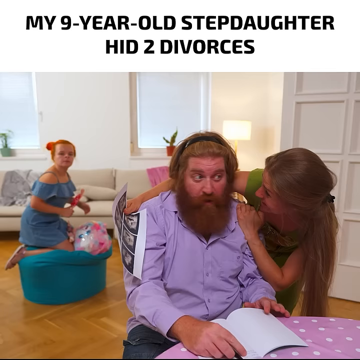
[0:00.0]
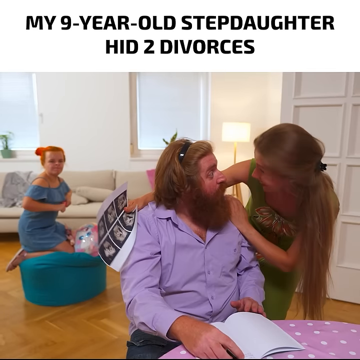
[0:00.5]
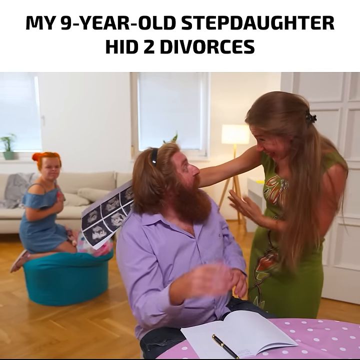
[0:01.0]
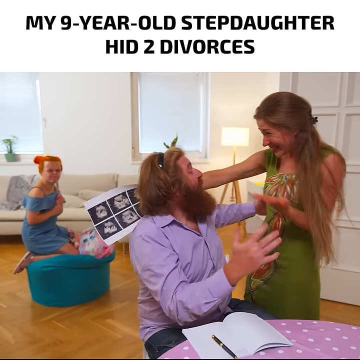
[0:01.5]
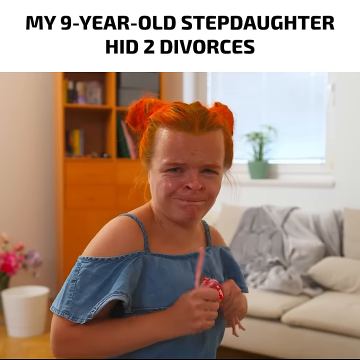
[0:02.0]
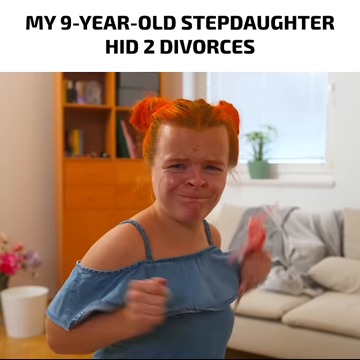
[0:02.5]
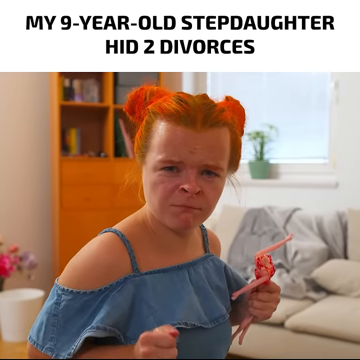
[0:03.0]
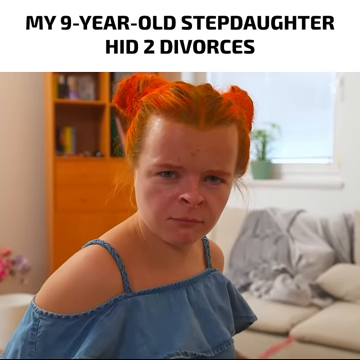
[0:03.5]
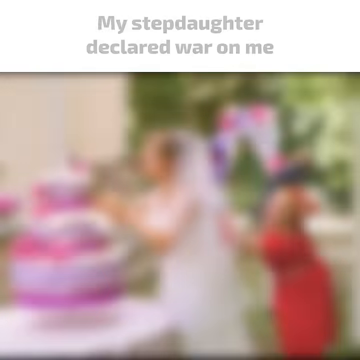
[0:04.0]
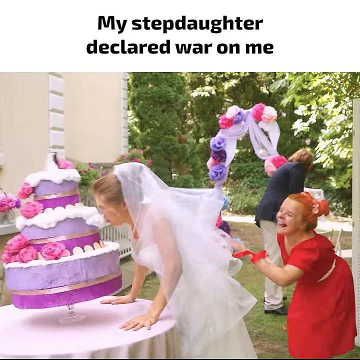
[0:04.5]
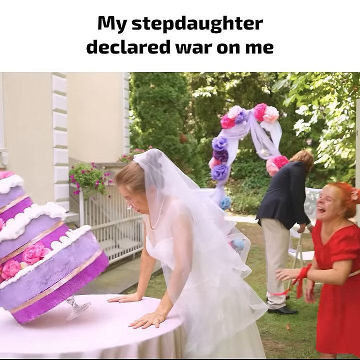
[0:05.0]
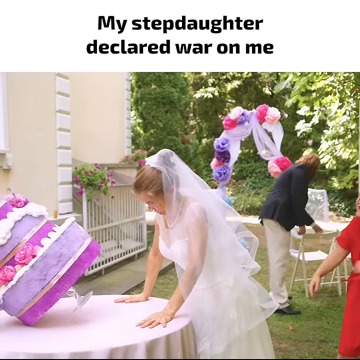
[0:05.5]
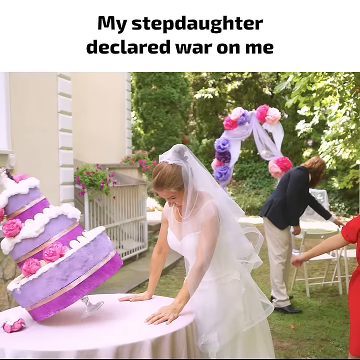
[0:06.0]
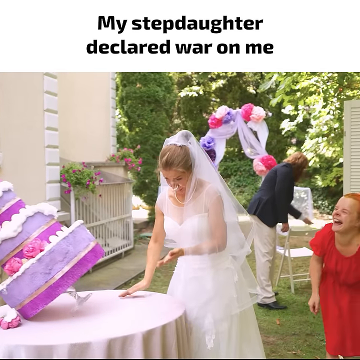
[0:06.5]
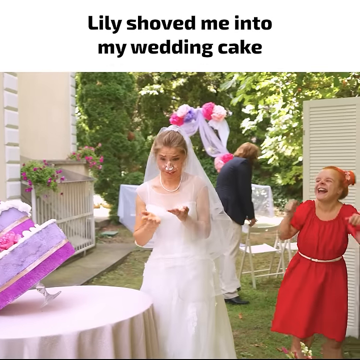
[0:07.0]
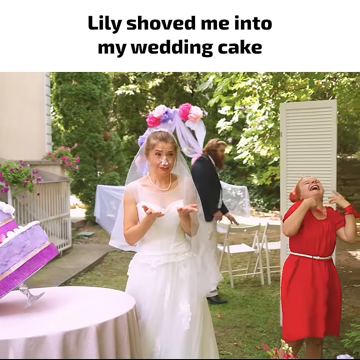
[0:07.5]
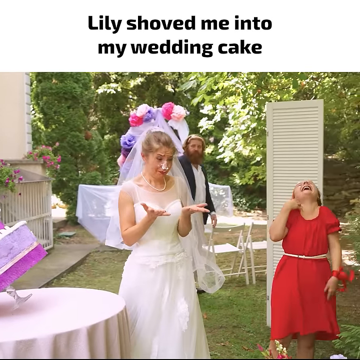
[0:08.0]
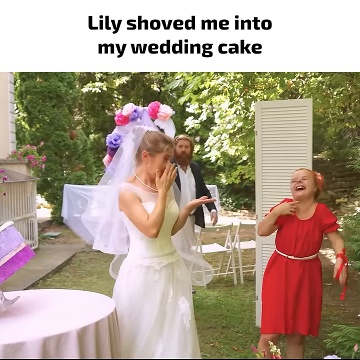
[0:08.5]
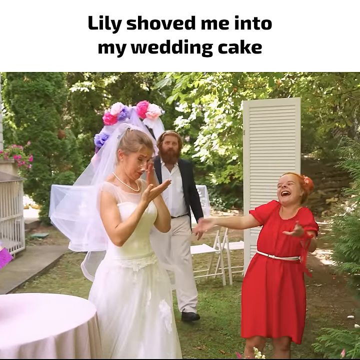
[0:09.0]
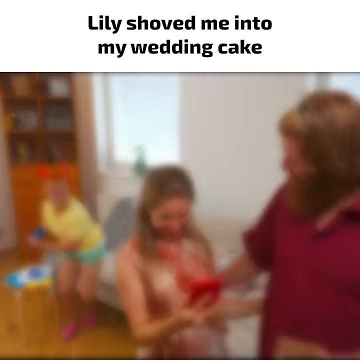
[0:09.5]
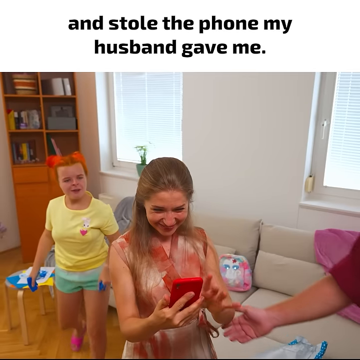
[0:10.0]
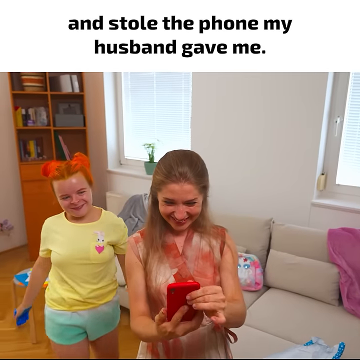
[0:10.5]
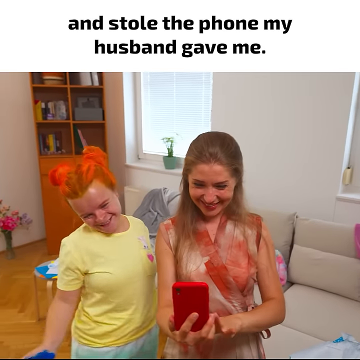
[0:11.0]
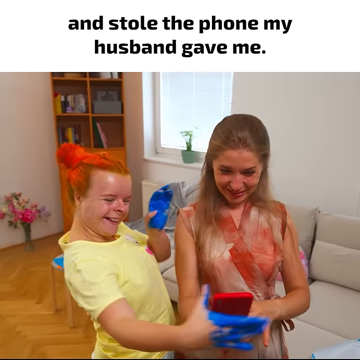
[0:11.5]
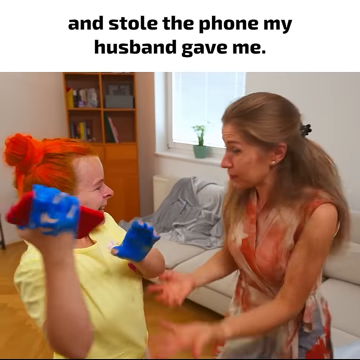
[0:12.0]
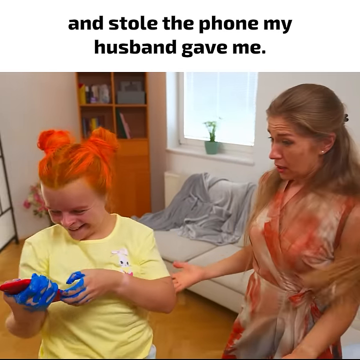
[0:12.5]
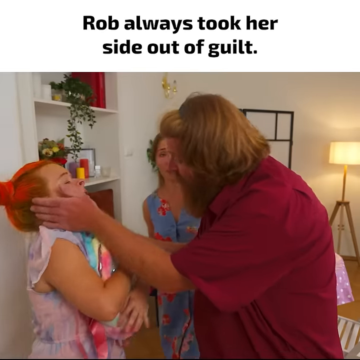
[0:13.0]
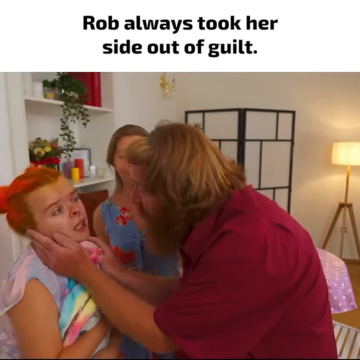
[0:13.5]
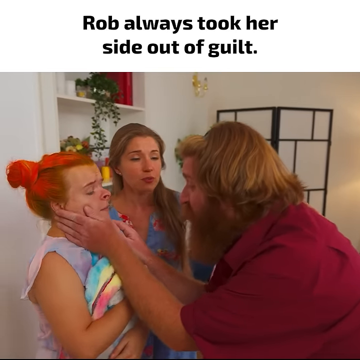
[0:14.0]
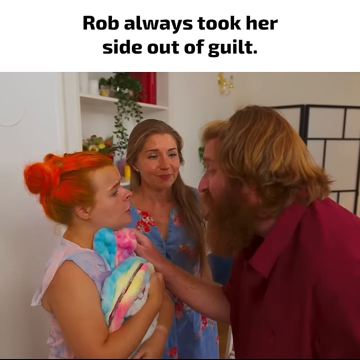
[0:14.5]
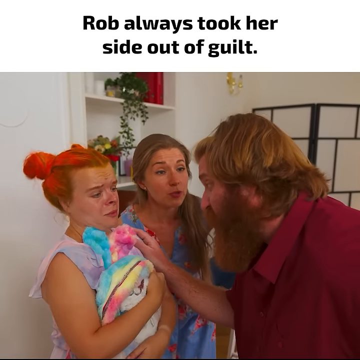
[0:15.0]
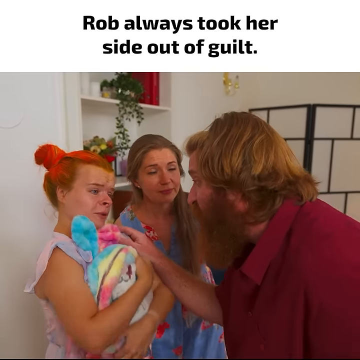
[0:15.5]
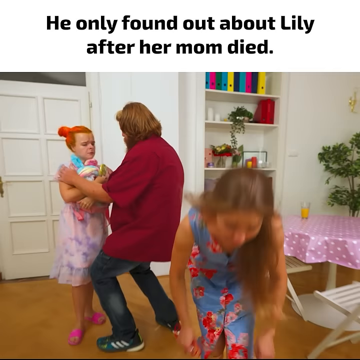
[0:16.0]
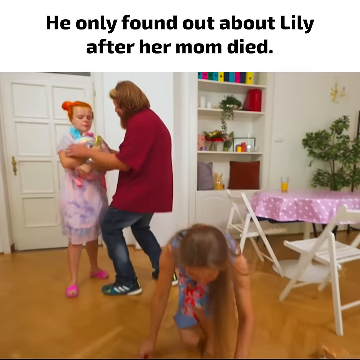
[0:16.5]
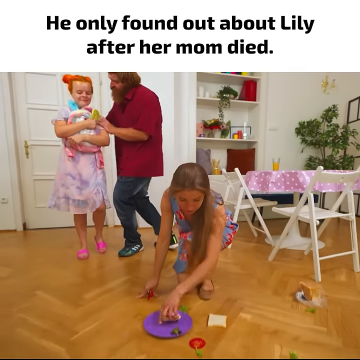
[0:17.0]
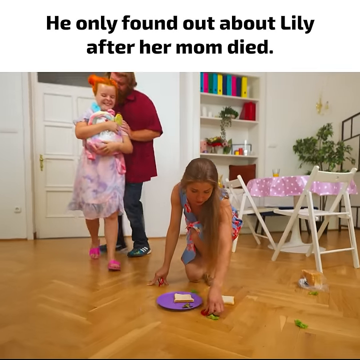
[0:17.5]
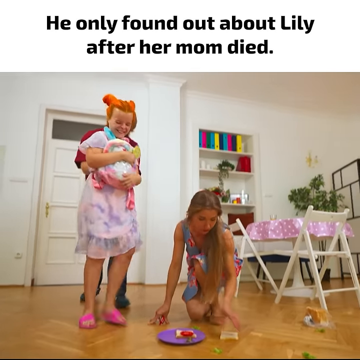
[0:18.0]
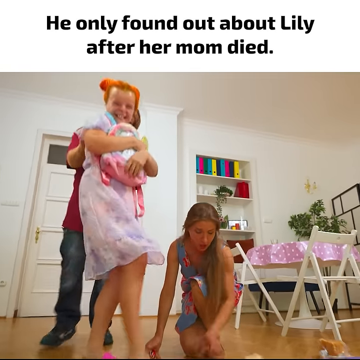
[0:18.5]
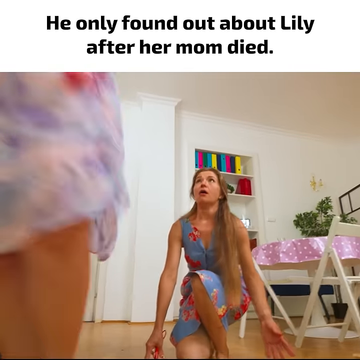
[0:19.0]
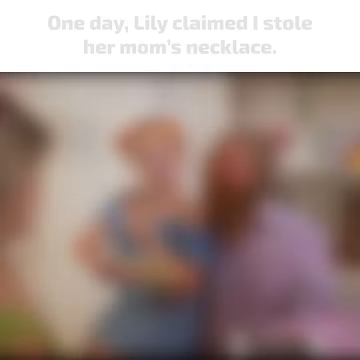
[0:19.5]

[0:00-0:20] The video appears to show a strange, gossip-type setting with stereotypical characters mugging for the camera. They are dressed in almost costume-like styles, such as wedding dresses and house frocks, and they pull faces for the camera and throw their hands up in the air. Overlay text appears, such as "Lily shoved me into my wedding cakes." It looks very much like a staged, performative video: the backgrounds appear to be constructed, and the people do not appear to be a real family. A logo reading "FS" is in the corner, with a heading beginning "short story to check before you"; the rest of it is not fully visible. The scenes appear to be done in a very tongue-in-cheek, unrealistic, semi-comic style. All the people so far are white, and they do not appear to be of a traditionally appropriate age for white wedding dresses and weddings. The setting seems to shift from inside a house to a sort of outdoor wedding setup.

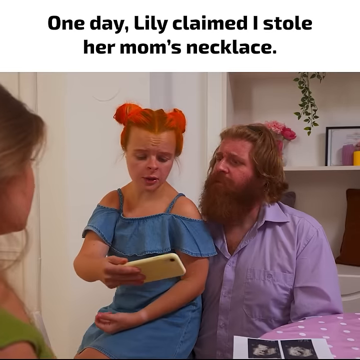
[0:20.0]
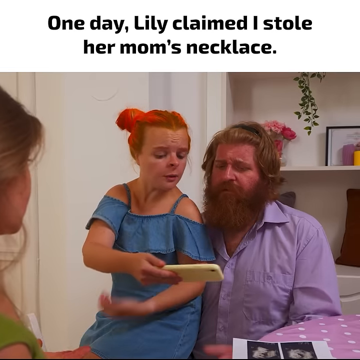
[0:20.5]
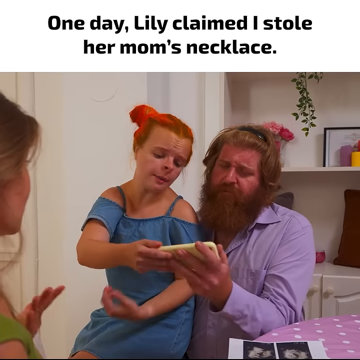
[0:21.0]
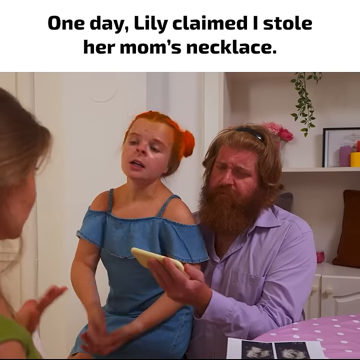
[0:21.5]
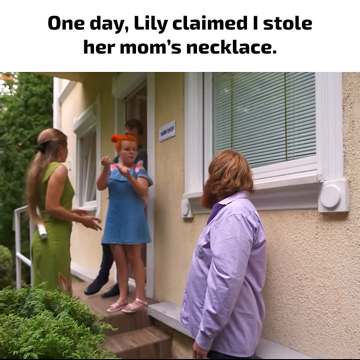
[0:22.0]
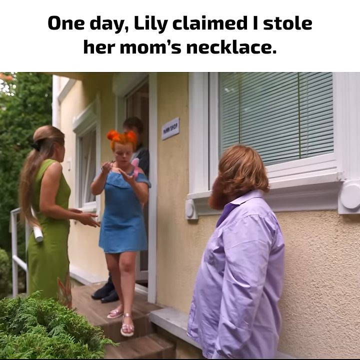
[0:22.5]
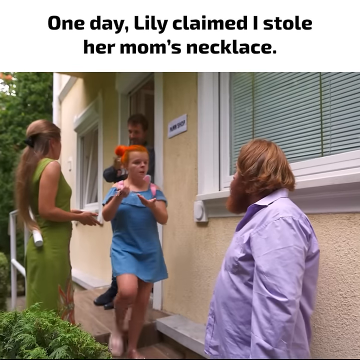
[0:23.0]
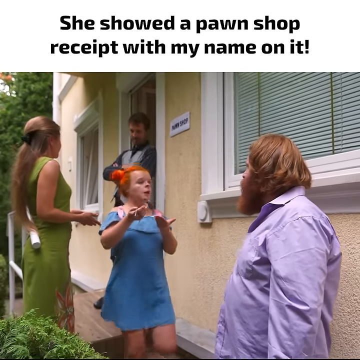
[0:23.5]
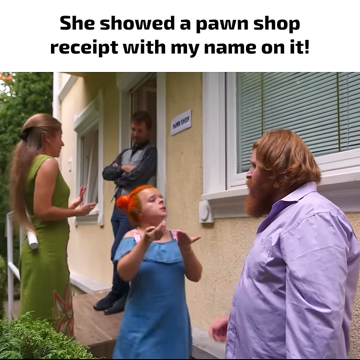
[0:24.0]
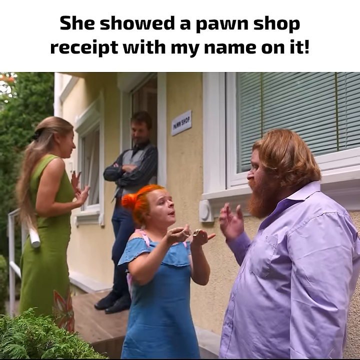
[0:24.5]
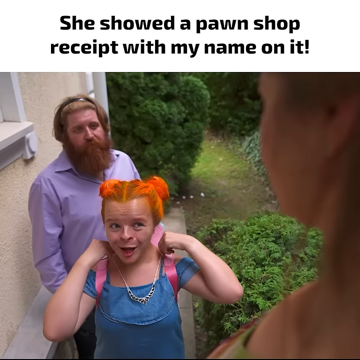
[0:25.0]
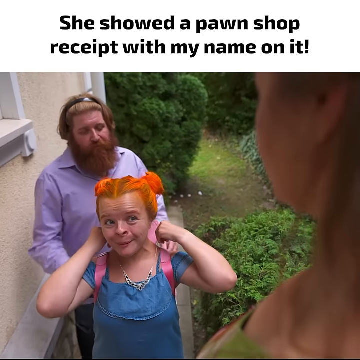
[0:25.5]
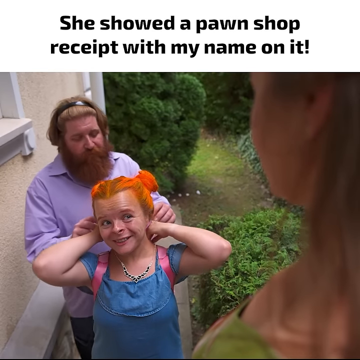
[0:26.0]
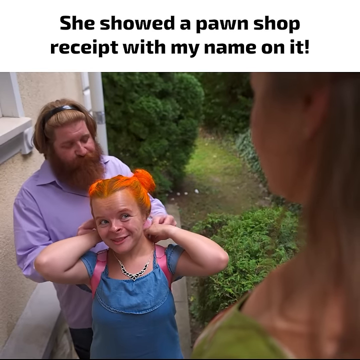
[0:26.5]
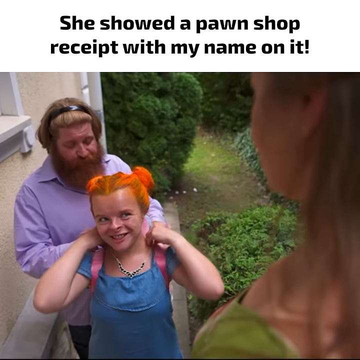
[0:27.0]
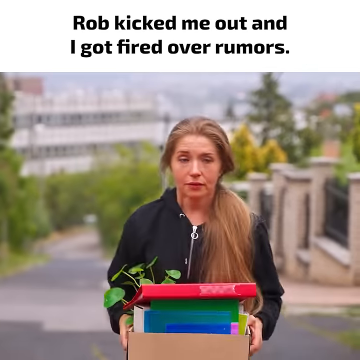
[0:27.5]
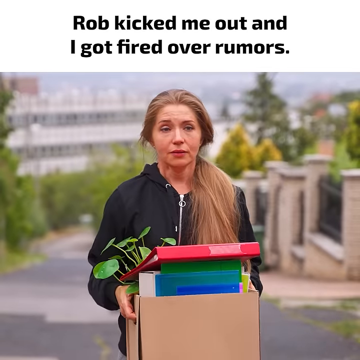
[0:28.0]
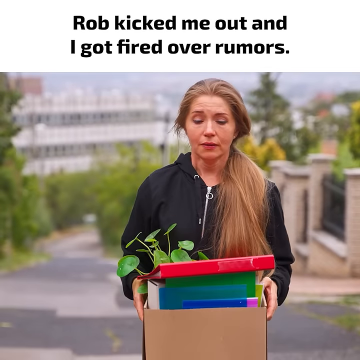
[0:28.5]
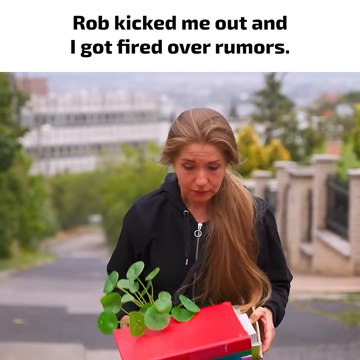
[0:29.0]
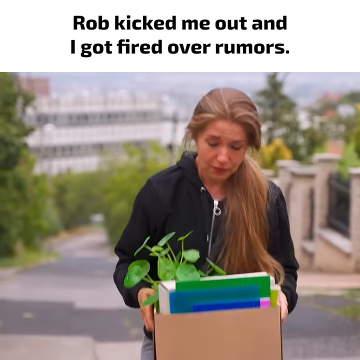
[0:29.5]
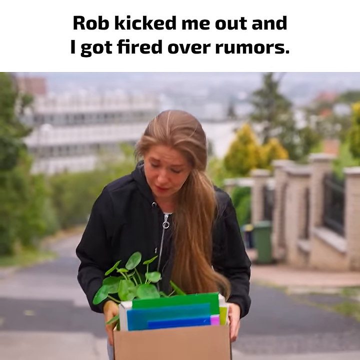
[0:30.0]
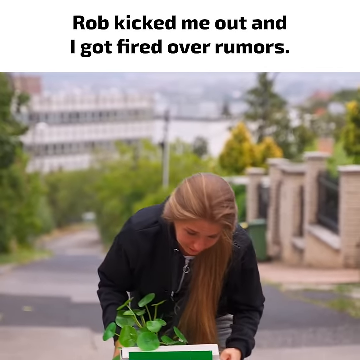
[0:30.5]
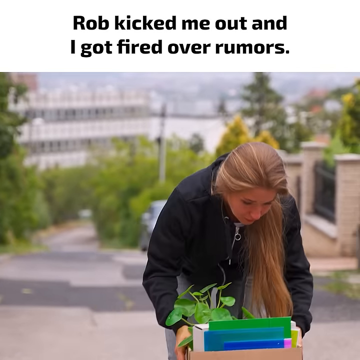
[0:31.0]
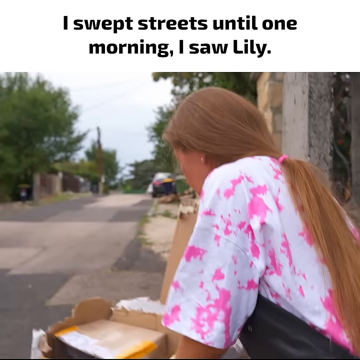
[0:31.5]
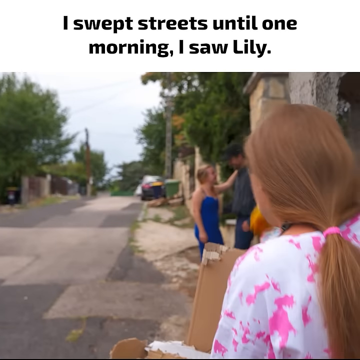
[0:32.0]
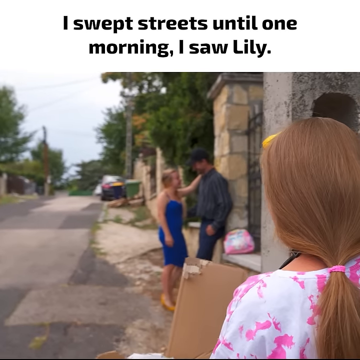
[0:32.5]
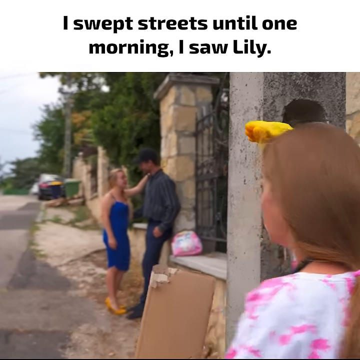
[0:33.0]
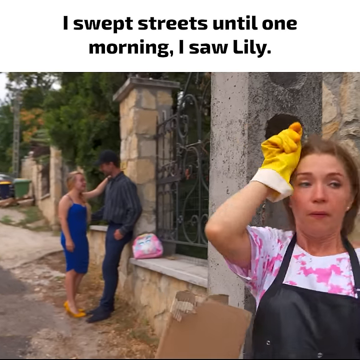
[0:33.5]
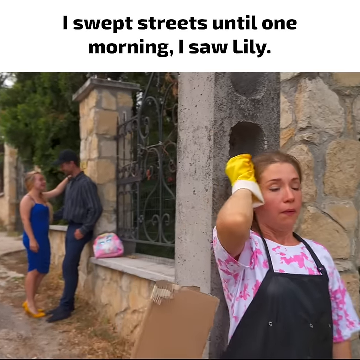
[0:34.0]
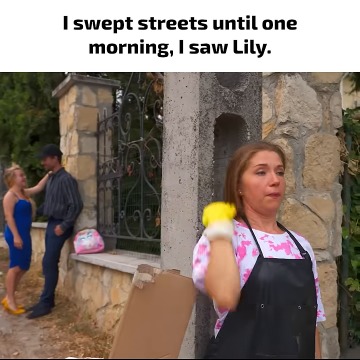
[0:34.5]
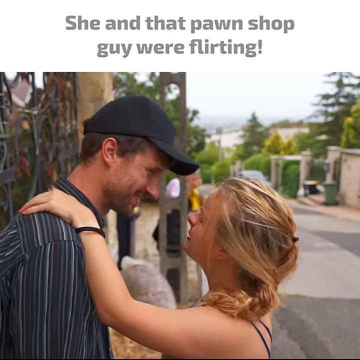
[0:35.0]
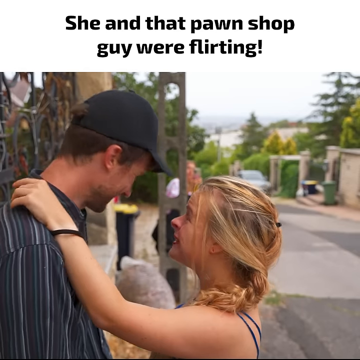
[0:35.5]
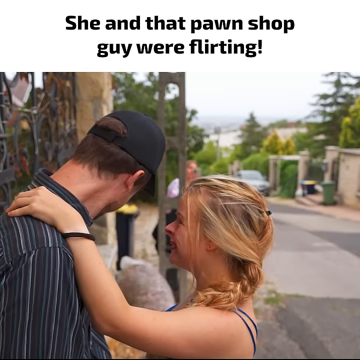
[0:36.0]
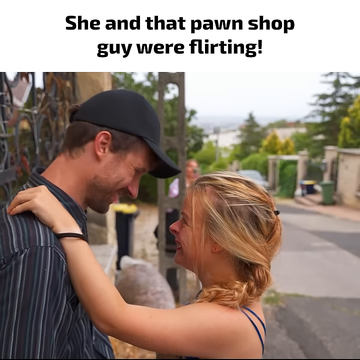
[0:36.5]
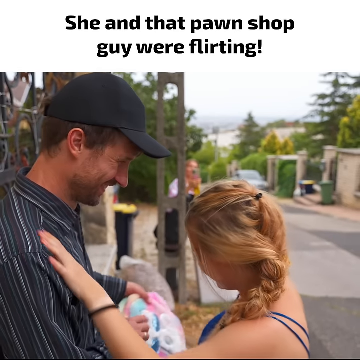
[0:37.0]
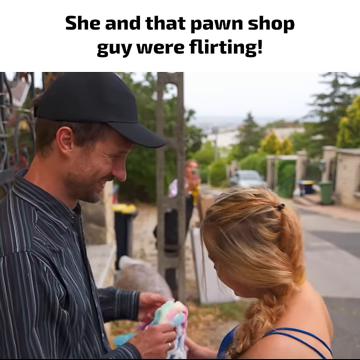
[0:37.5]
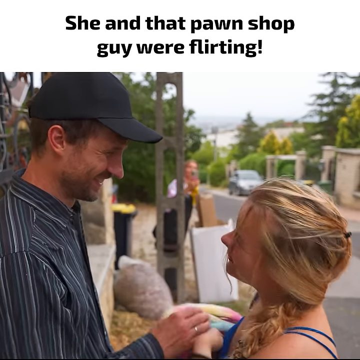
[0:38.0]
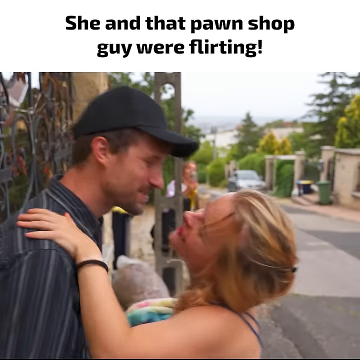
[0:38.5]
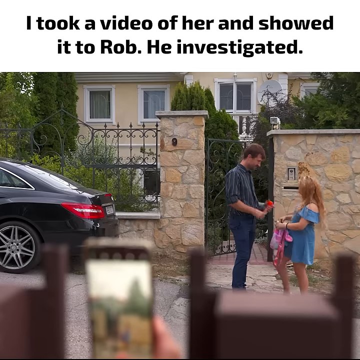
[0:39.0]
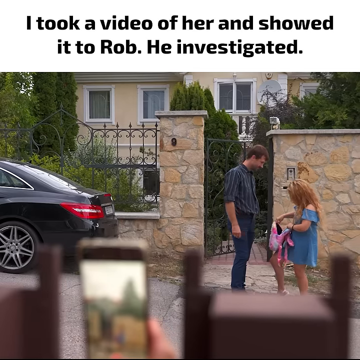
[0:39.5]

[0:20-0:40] People come out of a house, dressed strangely, as rolling overlay text appears, including "Rob kicked me out," "I got fired over the rumors," and "So I swept streets until one morning I saw Lily." It appears to be a restaged recounting of a horrific personal story, apparently set in a suburban area. People are dressed incongruously: some women have little Mickey Mouse-style top knots of hair on top of their heads, and people wander around in purple silk pajama tops. The style is not documentary but TikTok-like, with stereotypical, overly dramatic, staged and unrealistic representations of homes and situations. The characters talk at the camera, breaking the fourth wall. The overlay graphics are easy to read but move very quickly. Everybody appears to be white, and they are not particularly elegantly attired or made up.